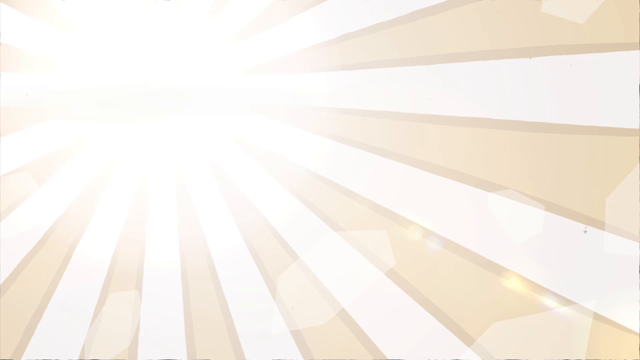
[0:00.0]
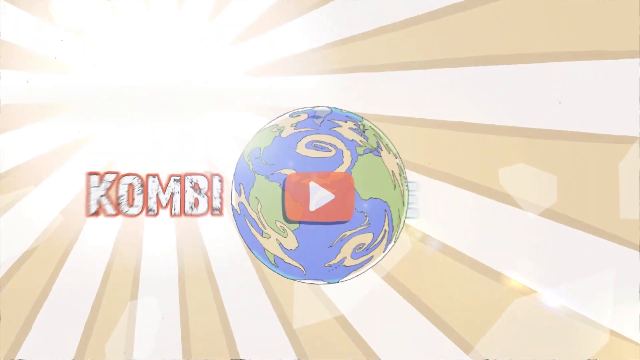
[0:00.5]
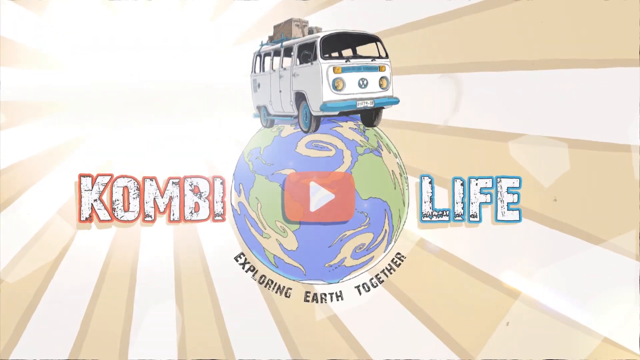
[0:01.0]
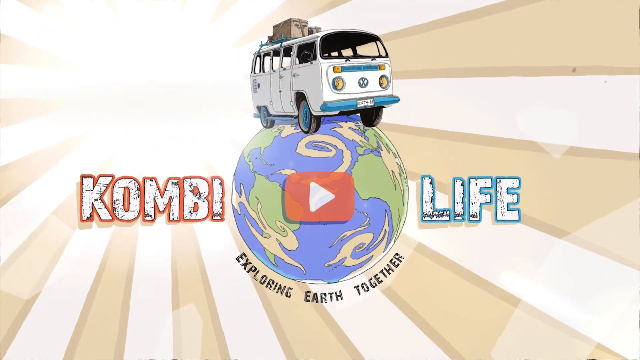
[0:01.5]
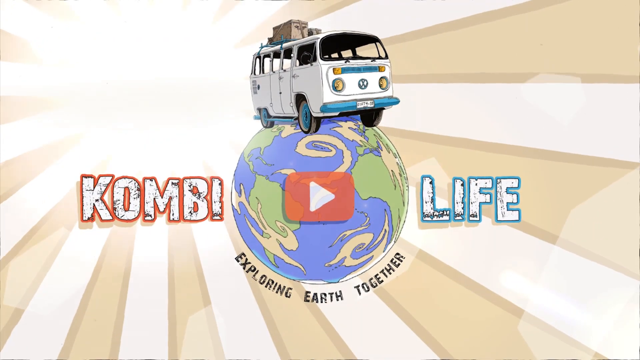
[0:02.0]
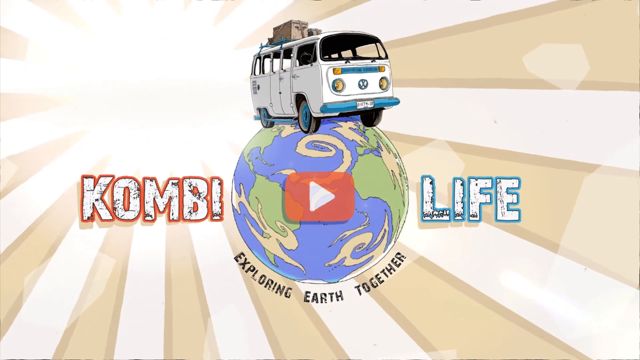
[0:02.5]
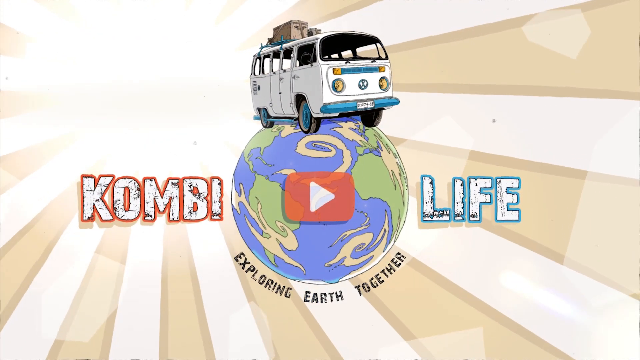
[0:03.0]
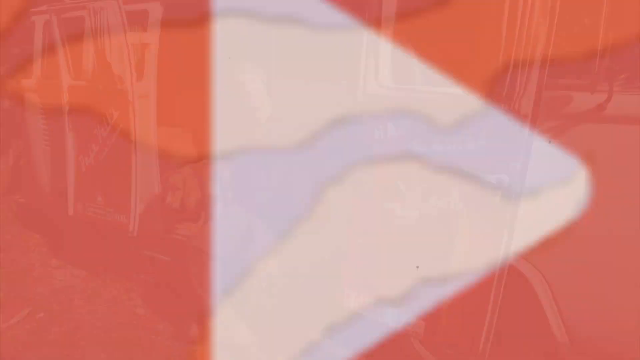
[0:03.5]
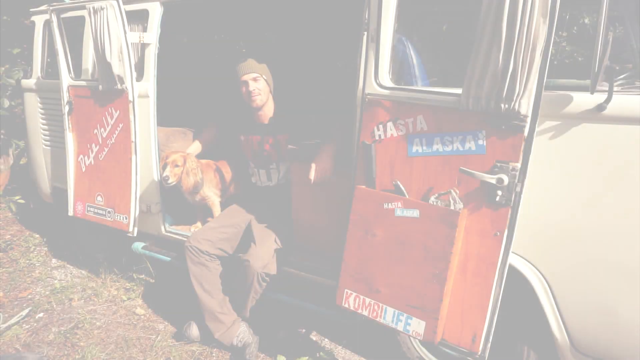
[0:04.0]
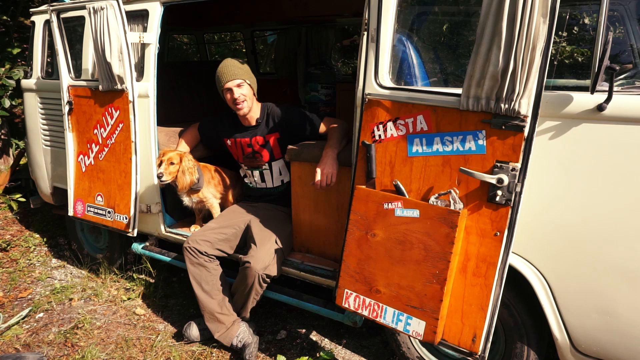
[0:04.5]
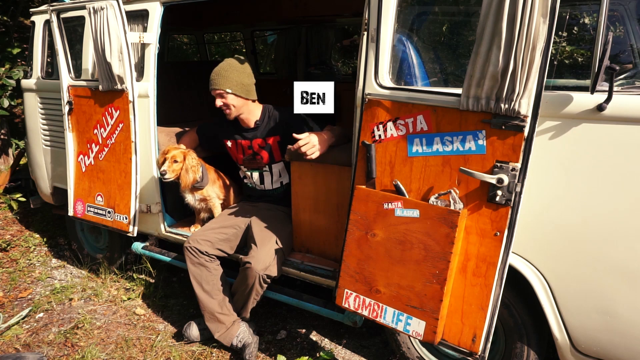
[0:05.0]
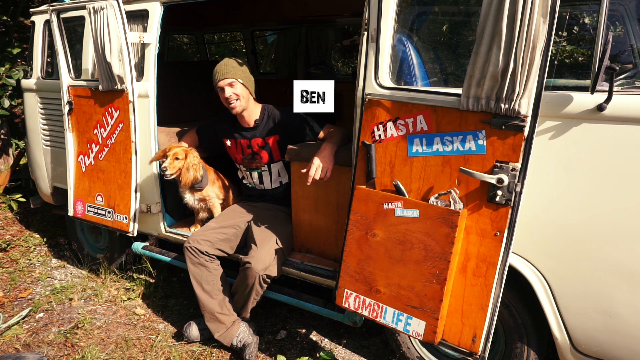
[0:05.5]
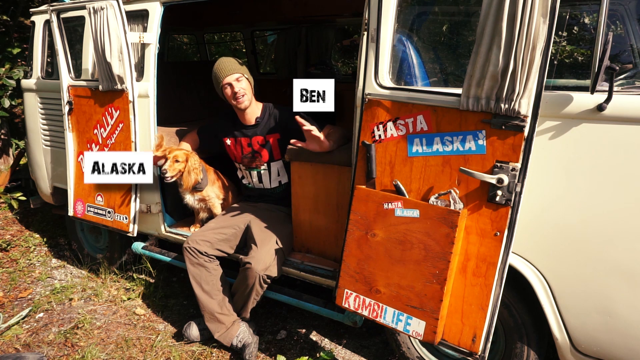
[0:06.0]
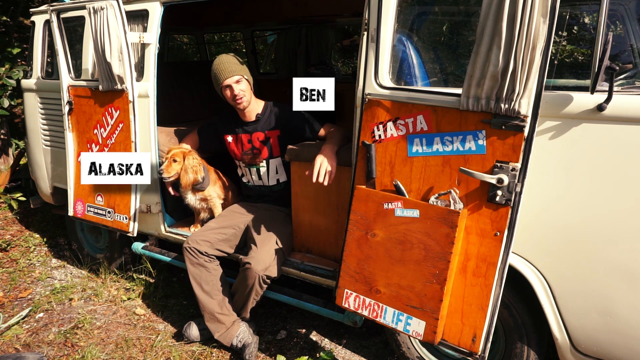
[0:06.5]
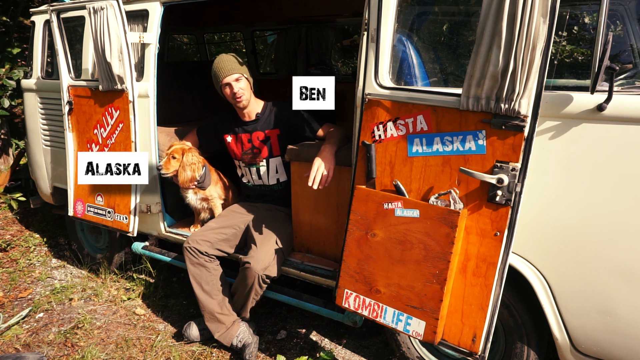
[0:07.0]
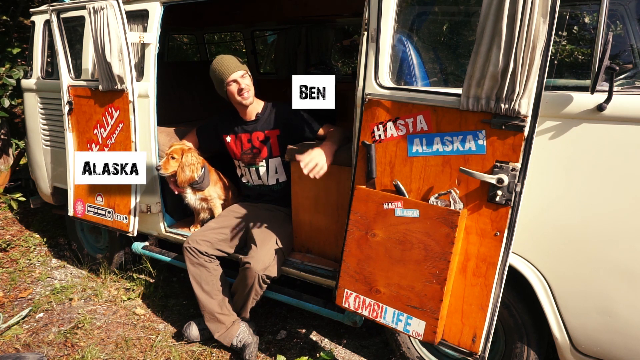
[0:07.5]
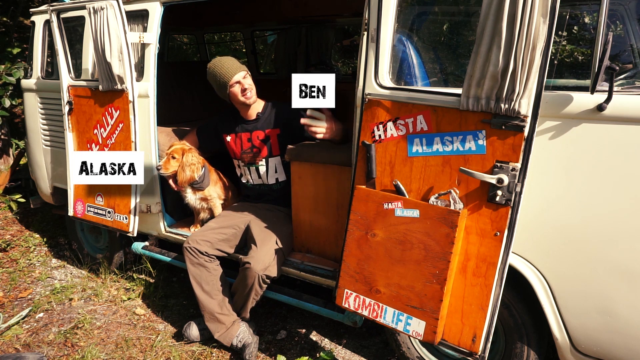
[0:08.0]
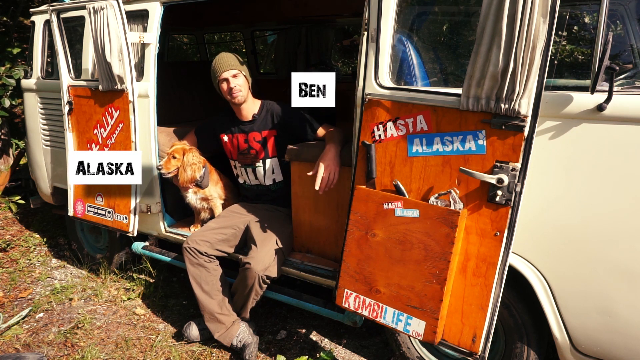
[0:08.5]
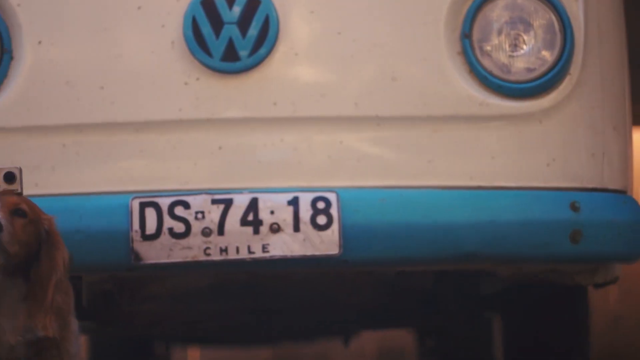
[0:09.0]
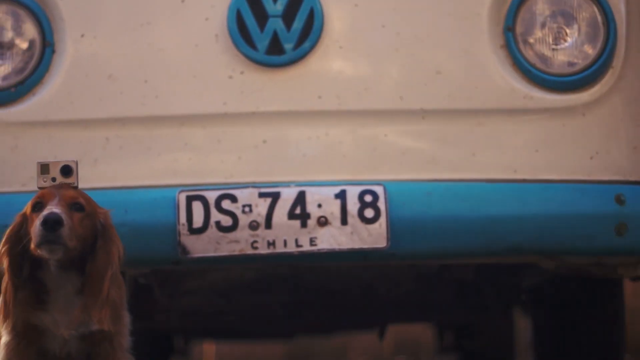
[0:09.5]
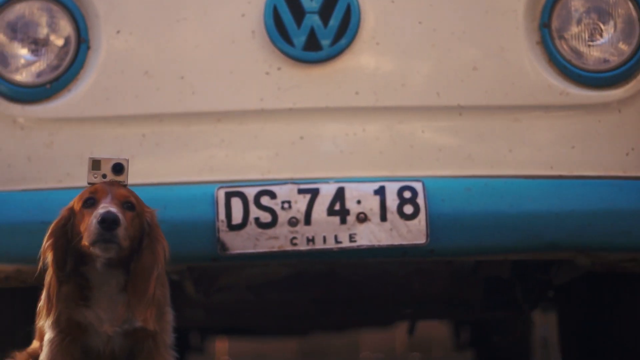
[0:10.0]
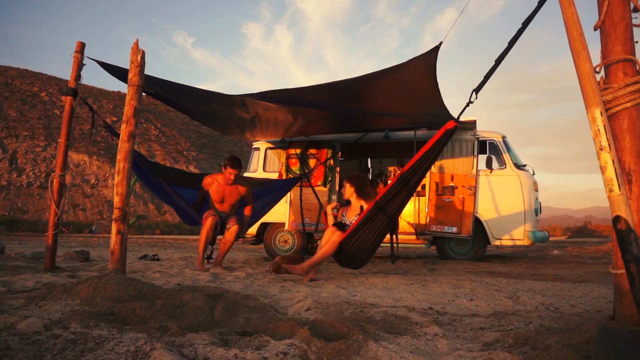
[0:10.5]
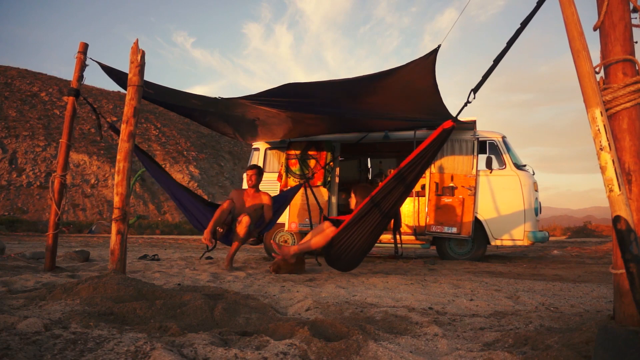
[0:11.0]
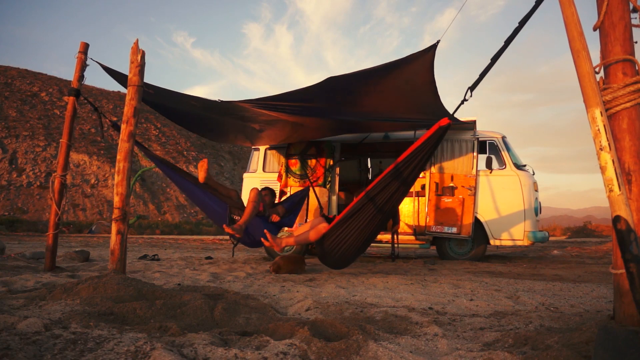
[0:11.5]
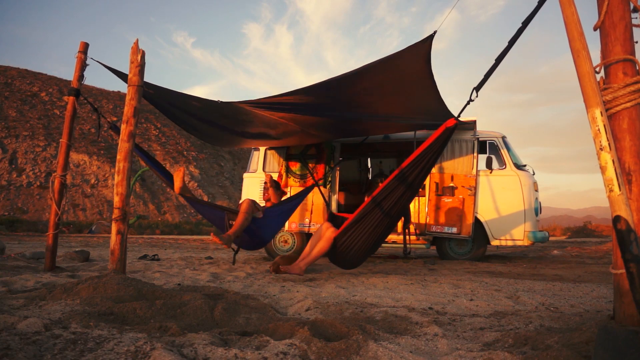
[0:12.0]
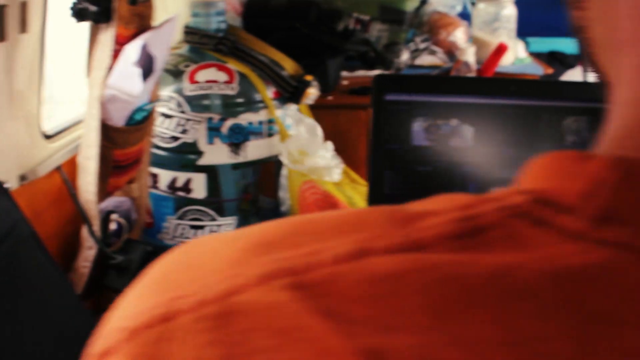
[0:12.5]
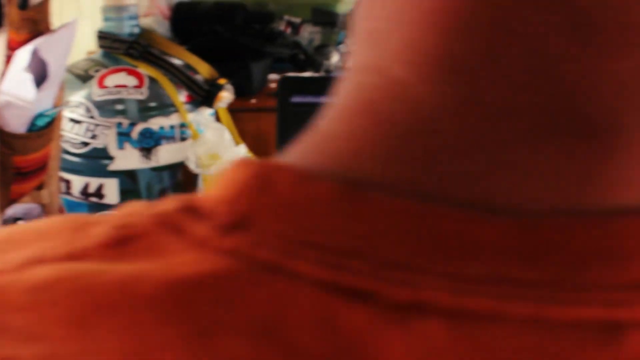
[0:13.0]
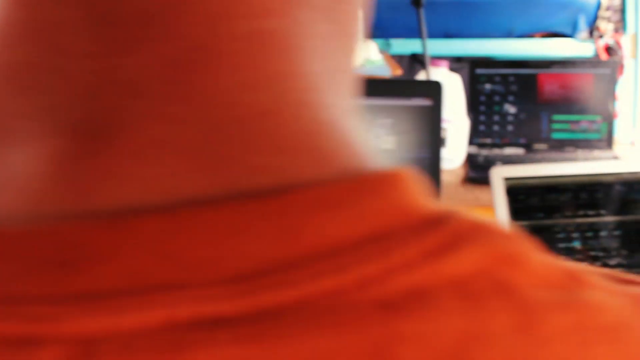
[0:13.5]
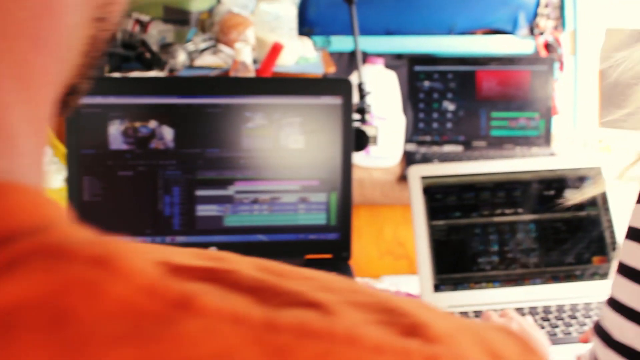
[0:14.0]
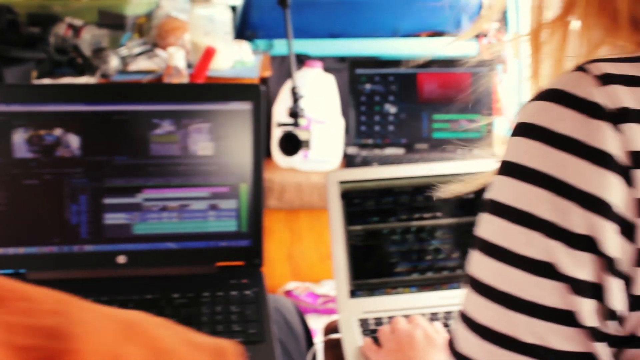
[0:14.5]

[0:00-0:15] The video opens with Combi Life, exploring the earth together. A guy sits with his dog in a van; they are Ben and Alaska, the dog being Alaska. A van appears with some hammocks, some people and computers, followed by the Combi Life logo again. Ben and Alaska sit outside the VW van, which is white with a blue bumper. Several people are on a computer, apparently looking for their next destination. The van is an old van that has been reworked. Hammocks have been put up in front of the van, and people relax on them. The dog looks like a spaniel, kind of a rust and white colored spaniel, apparently some kind of spaniel mix. A subscribe button with a little cartoon of the van is in the bottom right-hand corner. Ben looks young, probably in his mid-twenties.